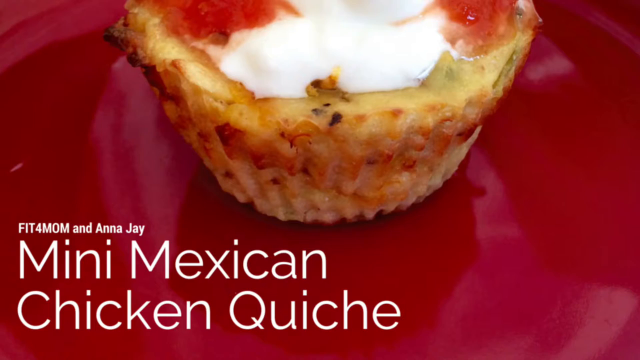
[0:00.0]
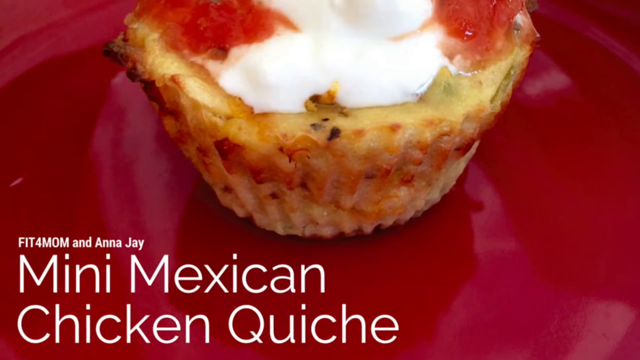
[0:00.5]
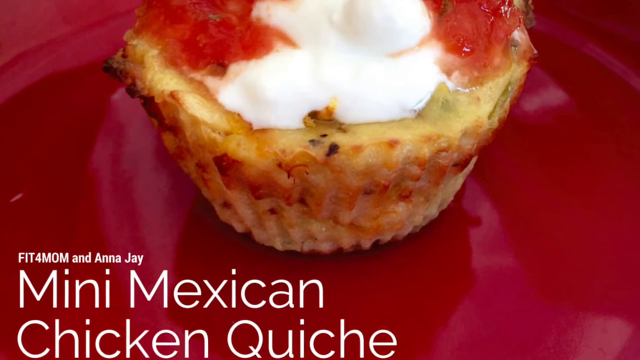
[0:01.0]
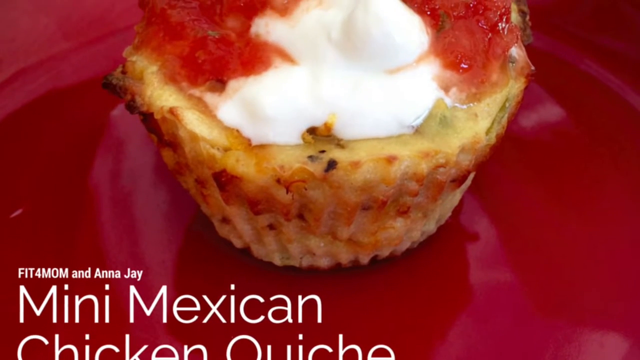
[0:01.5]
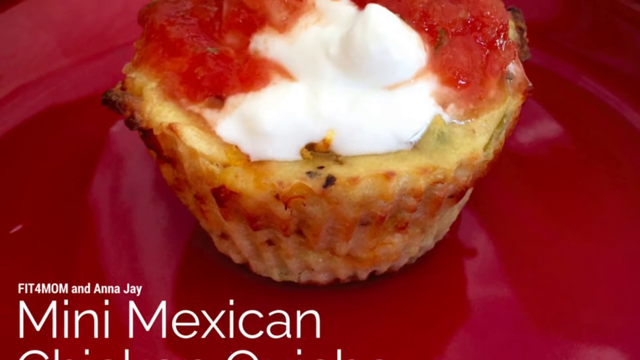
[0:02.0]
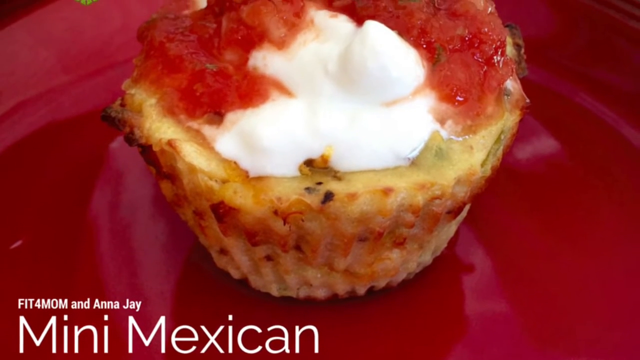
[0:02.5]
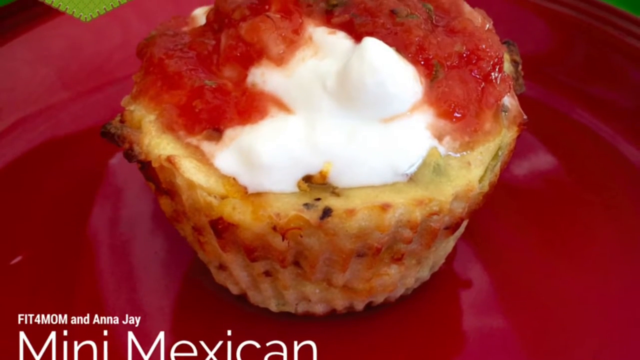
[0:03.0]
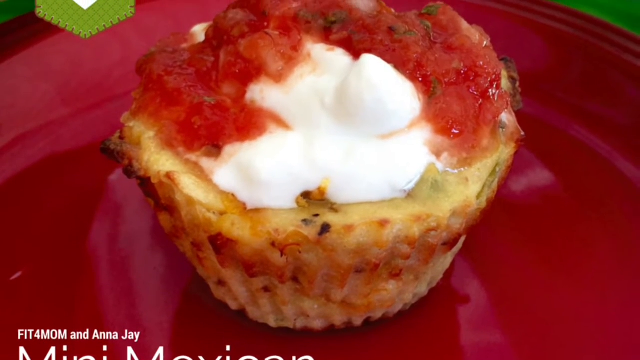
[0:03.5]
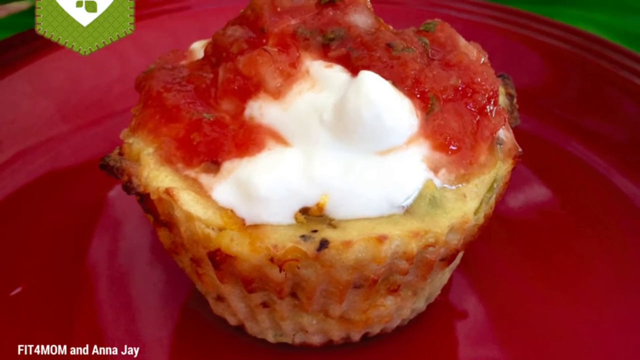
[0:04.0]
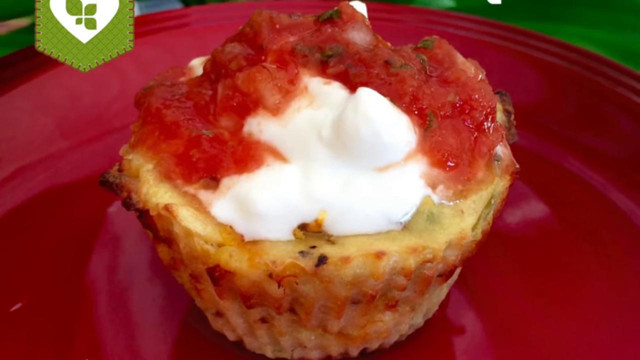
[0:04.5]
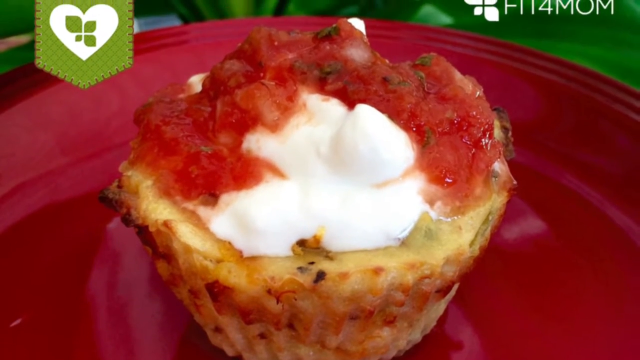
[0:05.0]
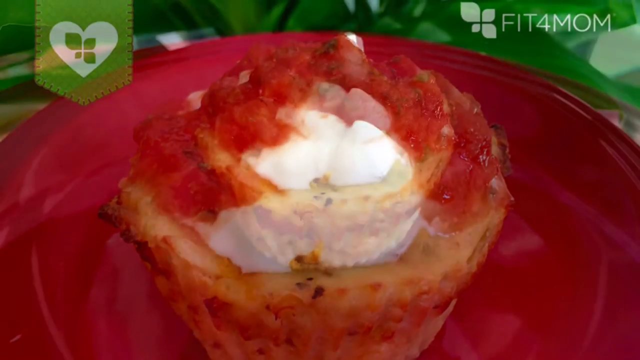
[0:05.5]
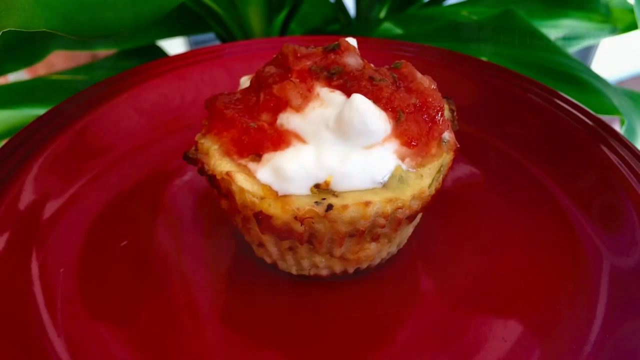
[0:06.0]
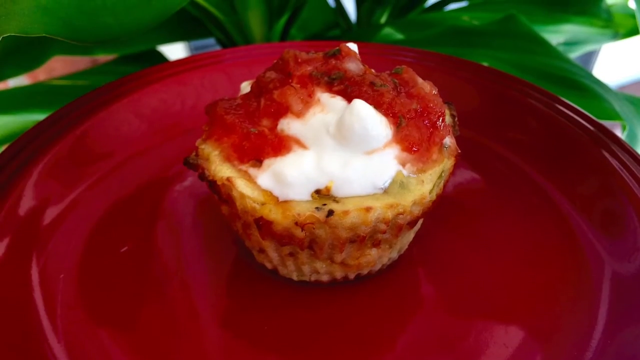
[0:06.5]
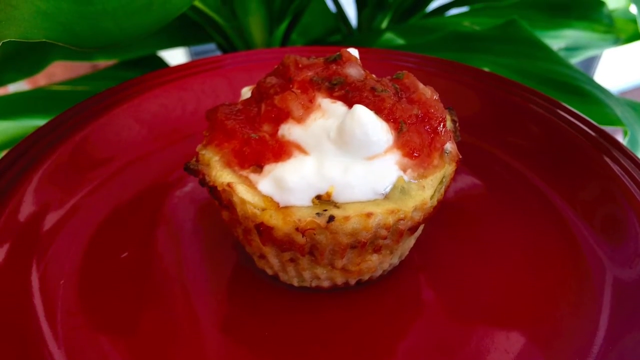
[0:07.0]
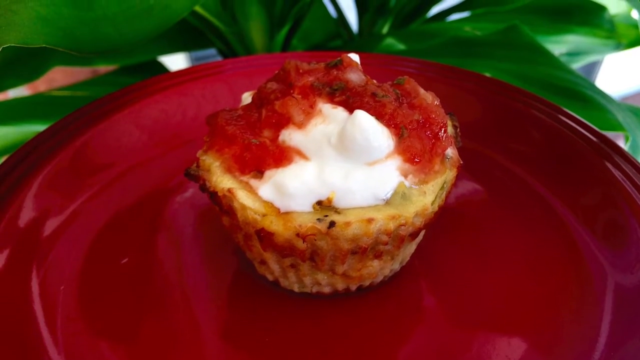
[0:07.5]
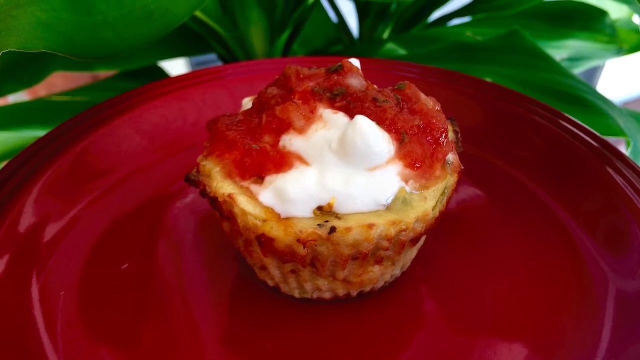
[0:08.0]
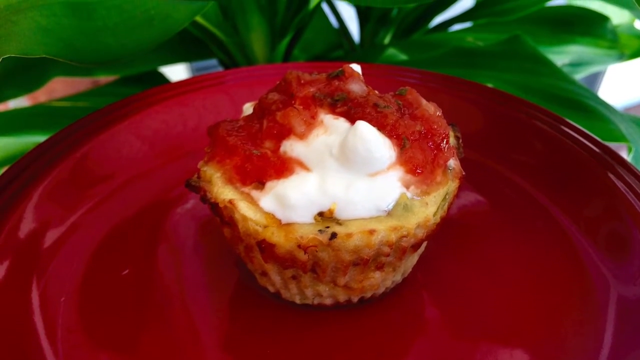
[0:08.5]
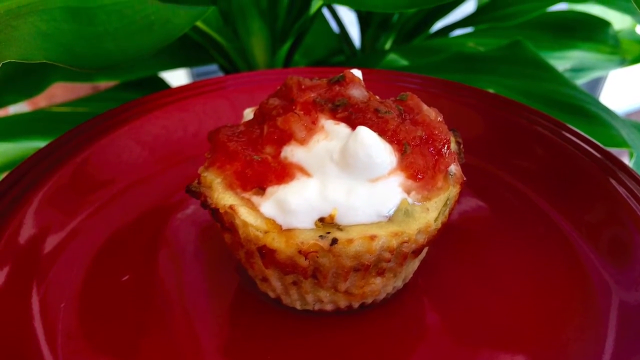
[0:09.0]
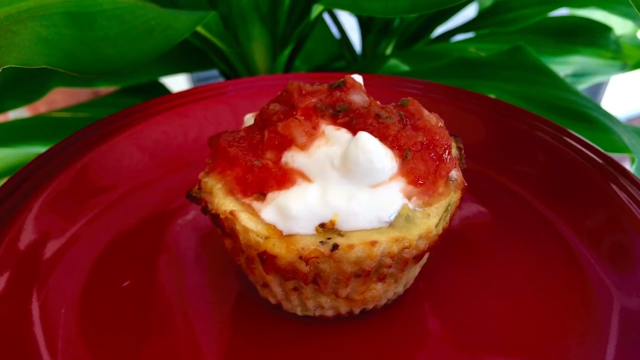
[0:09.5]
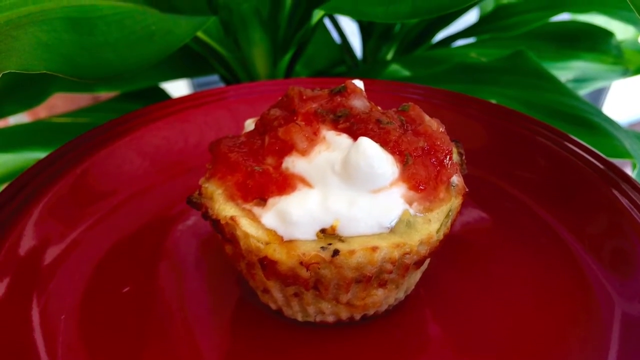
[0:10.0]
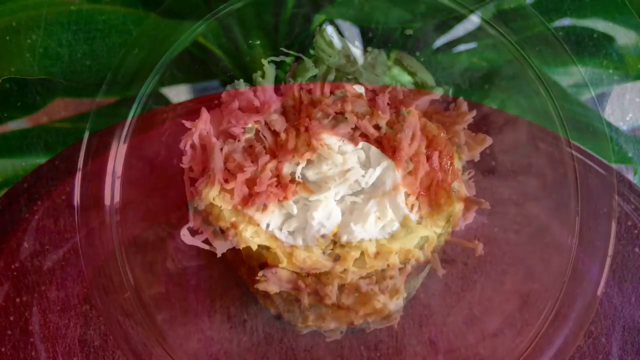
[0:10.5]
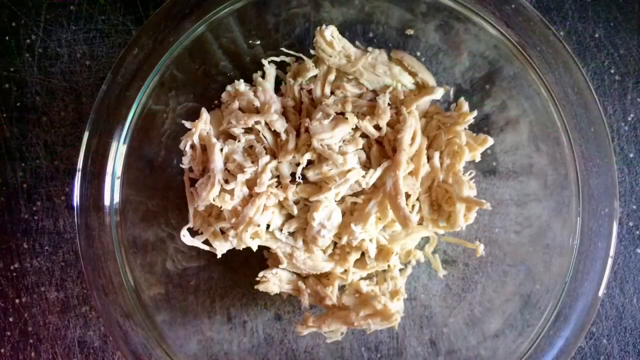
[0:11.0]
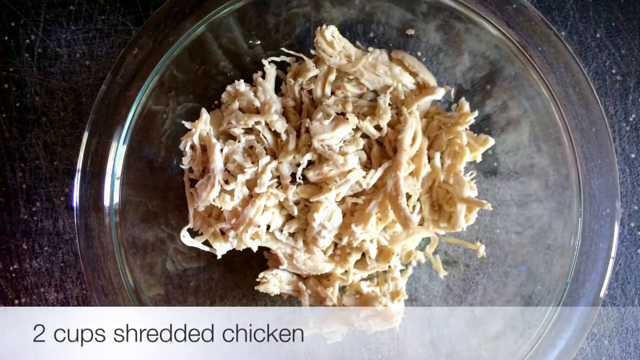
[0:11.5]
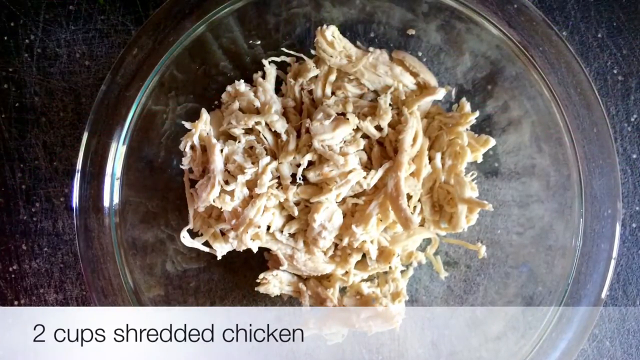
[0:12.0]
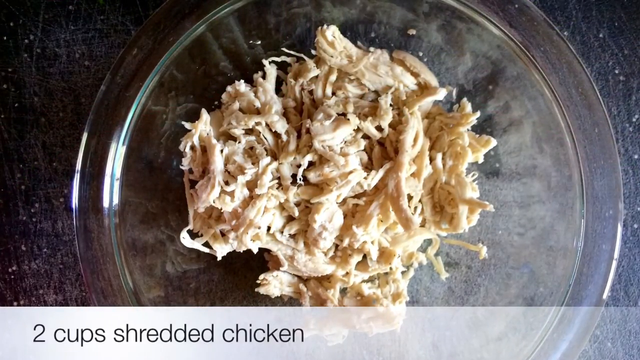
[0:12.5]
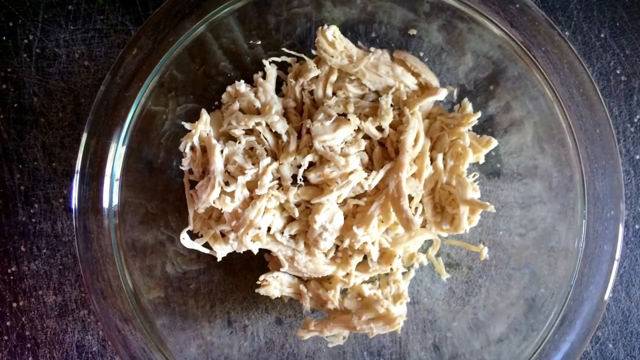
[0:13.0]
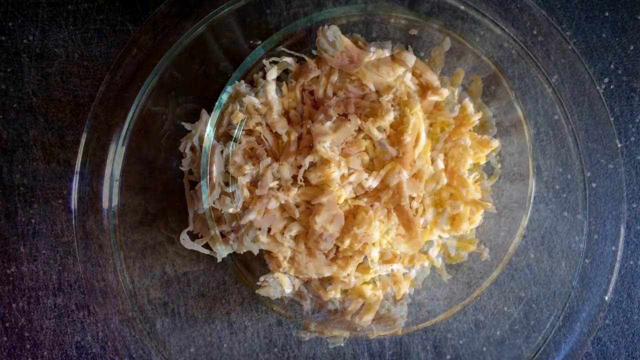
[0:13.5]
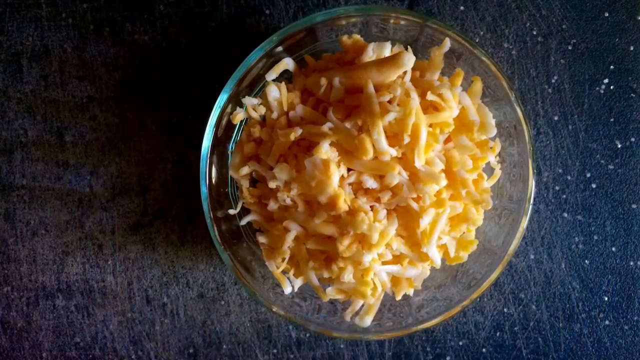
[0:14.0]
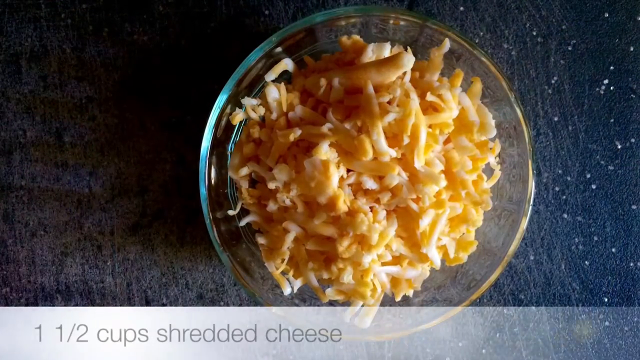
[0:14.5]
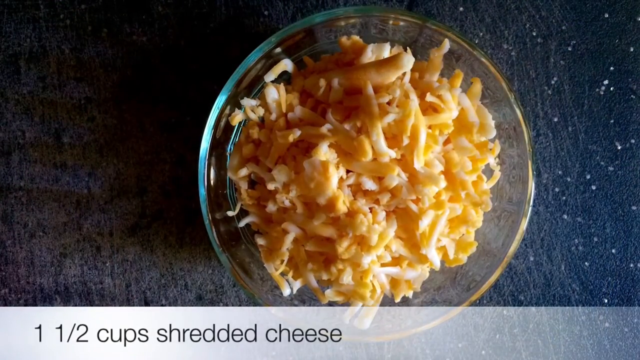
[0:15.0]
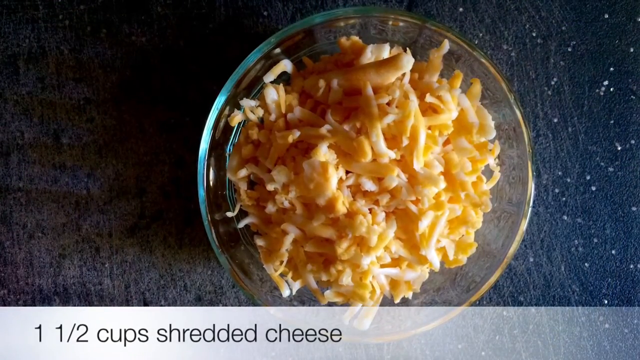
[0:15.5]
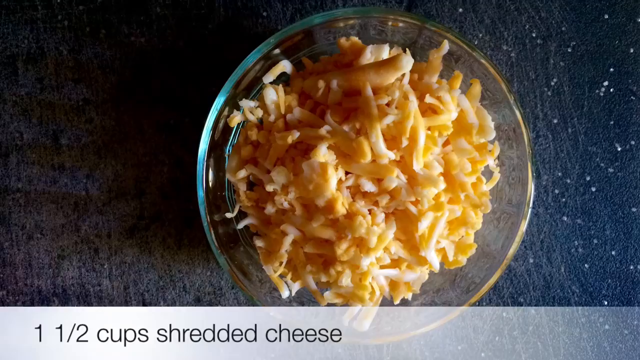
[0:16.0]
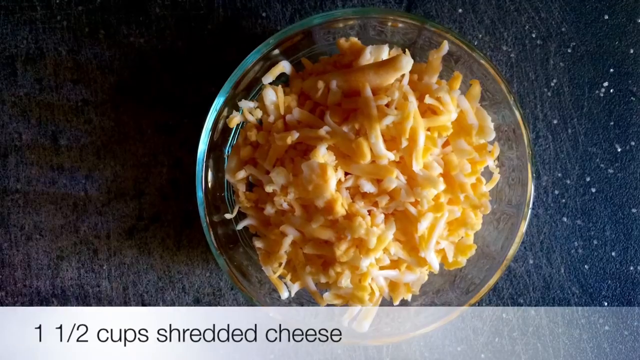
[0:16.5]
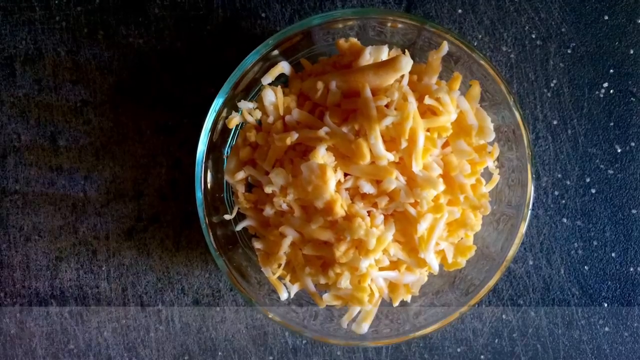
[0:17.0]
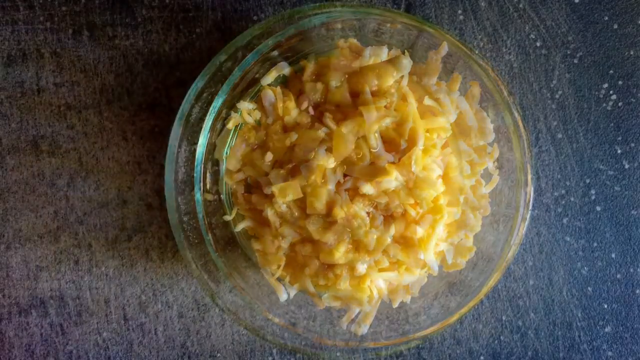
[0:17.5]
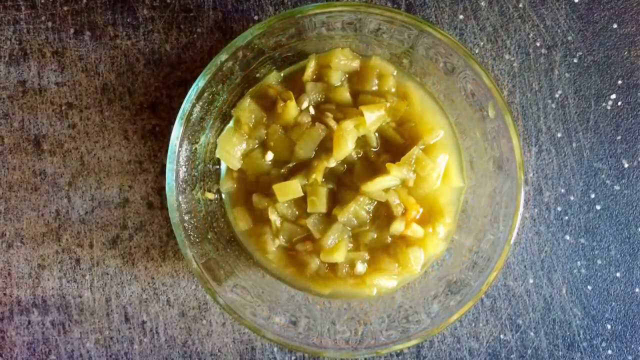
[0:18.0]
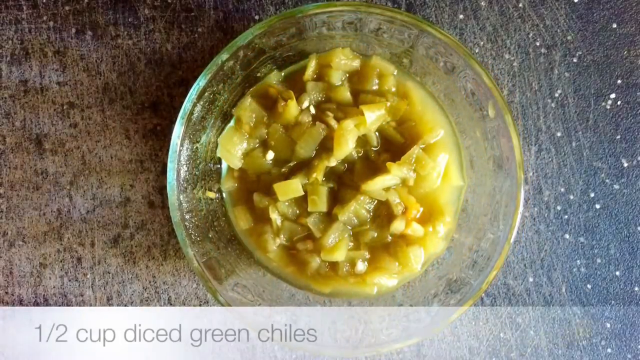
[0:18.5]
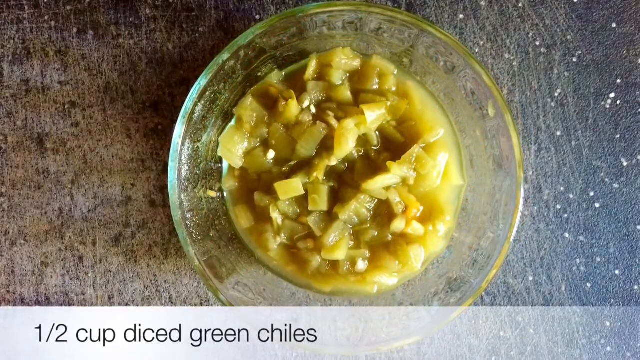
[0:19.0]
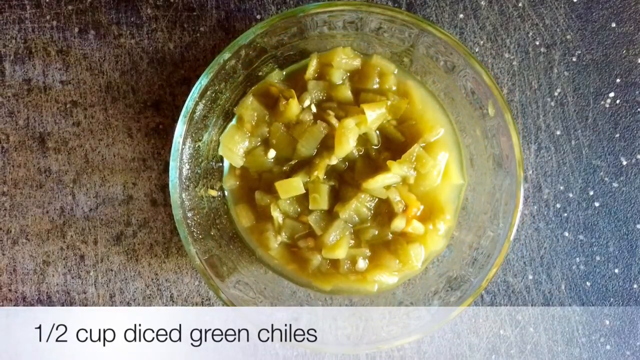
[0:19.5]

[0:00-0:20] A mini Mexican chicken quiche is shown; it looks kind of like a little mini cupcake, and on top it appears to have some cheese and some sauce. It is on a red plate, with some greenery visible behind it. The camera scrolls upward on the quiche. Then a glass bowl of shredded chicken is shown, followed by a bowl of something that might be cheese and another bowl of a mixture that may be greenish peppers for the quiche. In the corner of the screen there is a little green symbol with a heart, its meaning unclear. Text on screen reads "two cups of shredded chicken", then "one and a half cups of shredded cheese" and "one and a half cups of diced green chilies".